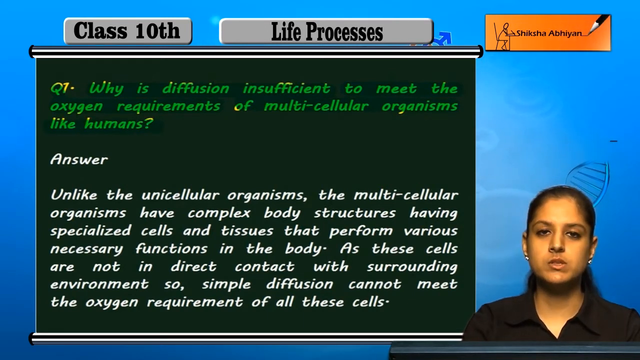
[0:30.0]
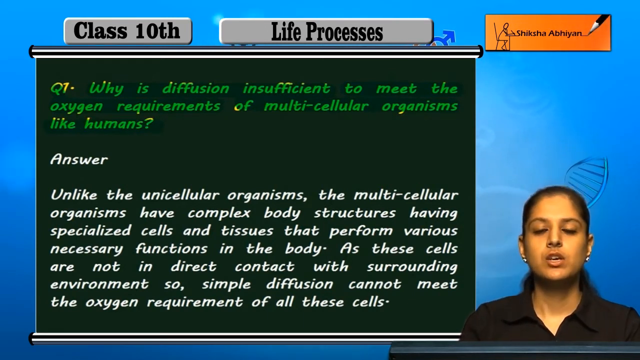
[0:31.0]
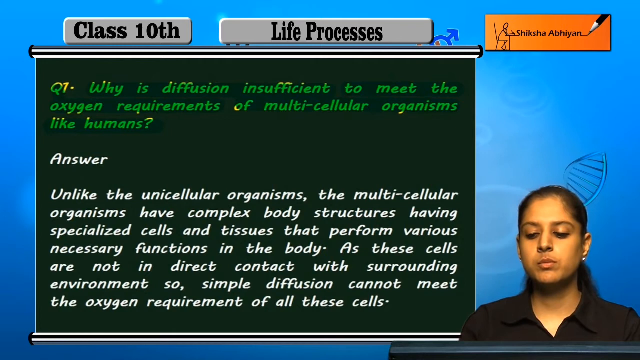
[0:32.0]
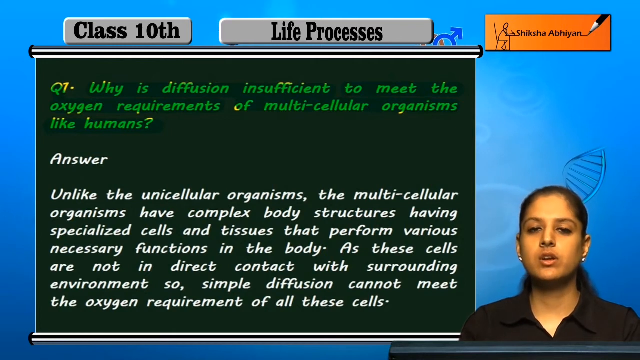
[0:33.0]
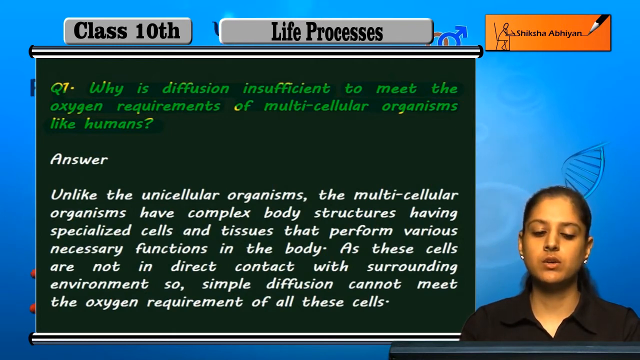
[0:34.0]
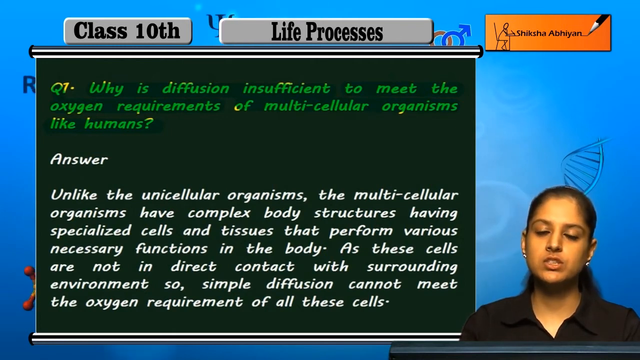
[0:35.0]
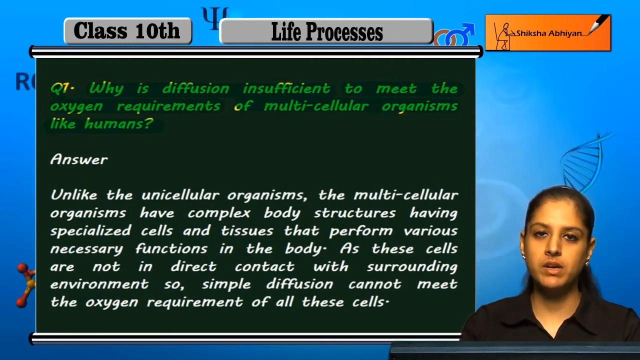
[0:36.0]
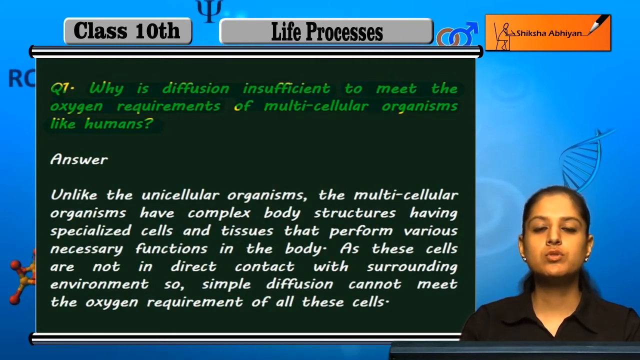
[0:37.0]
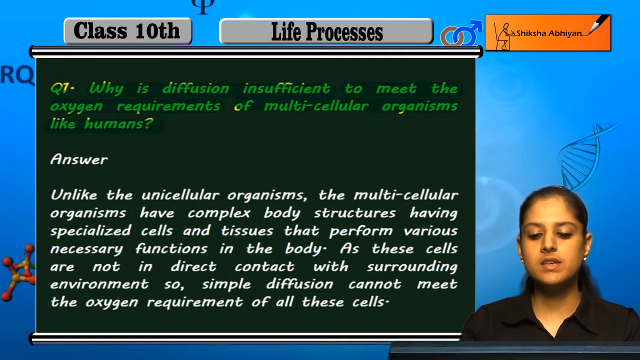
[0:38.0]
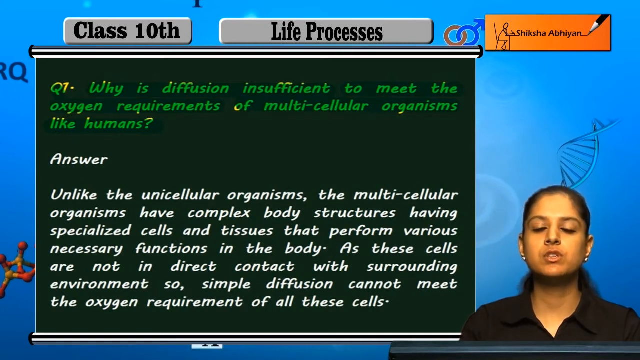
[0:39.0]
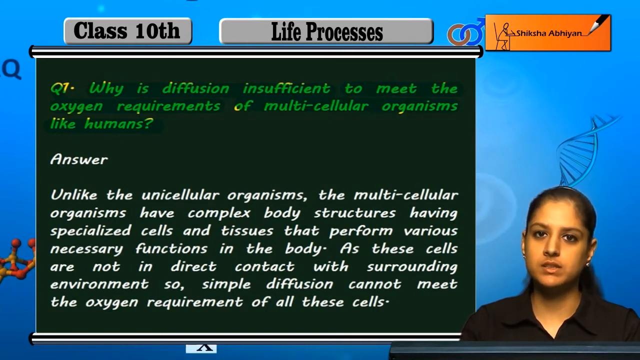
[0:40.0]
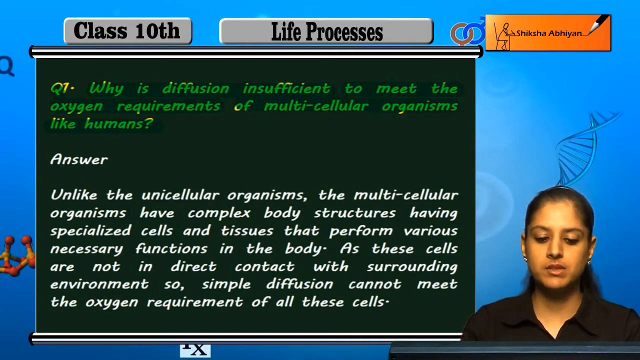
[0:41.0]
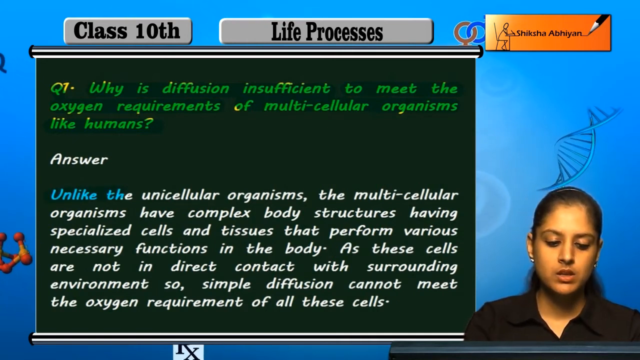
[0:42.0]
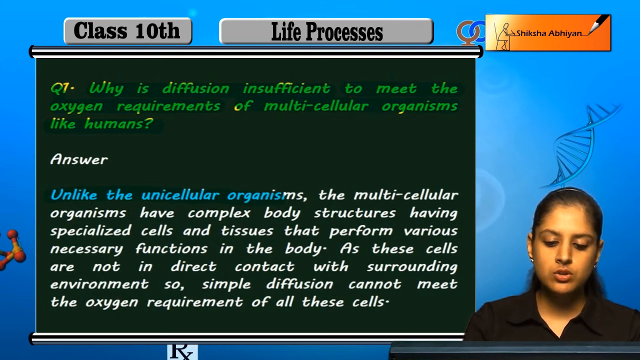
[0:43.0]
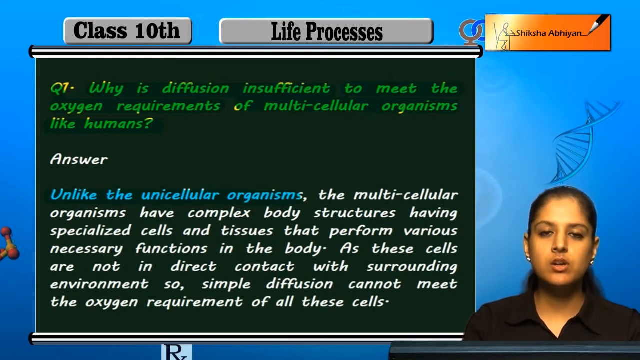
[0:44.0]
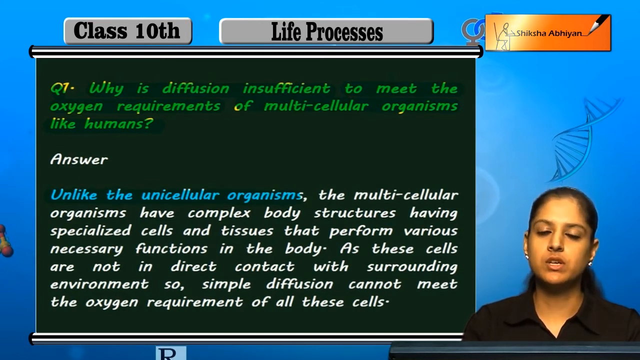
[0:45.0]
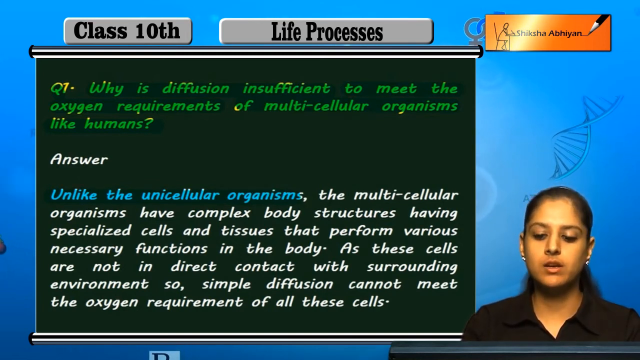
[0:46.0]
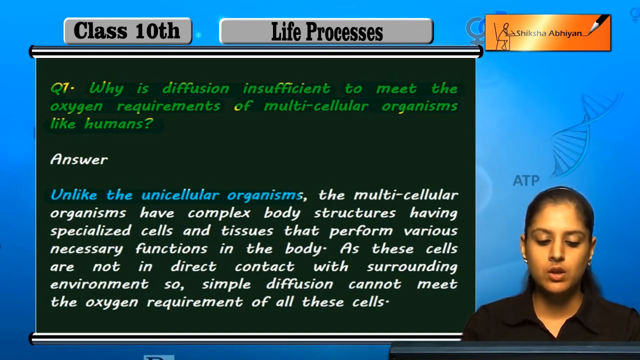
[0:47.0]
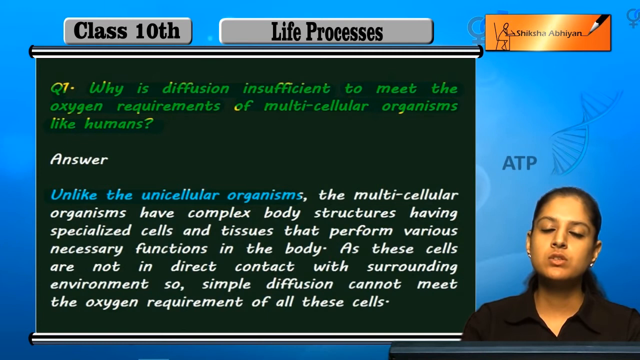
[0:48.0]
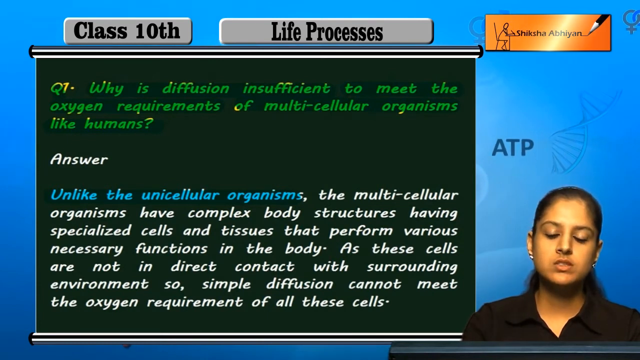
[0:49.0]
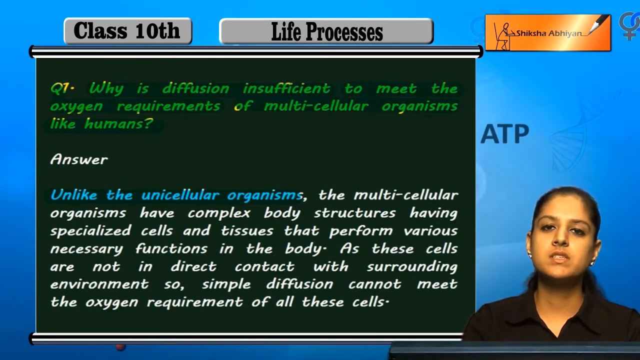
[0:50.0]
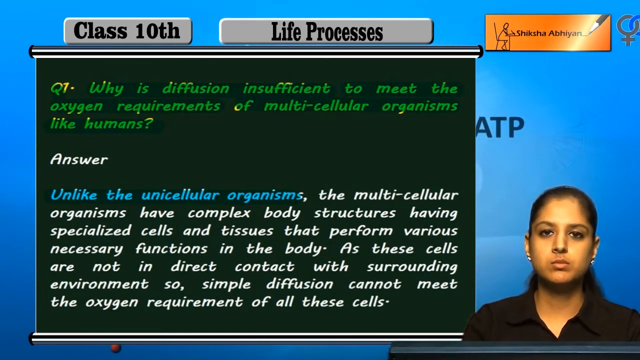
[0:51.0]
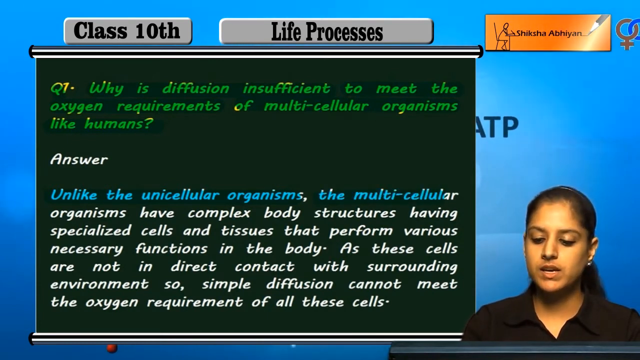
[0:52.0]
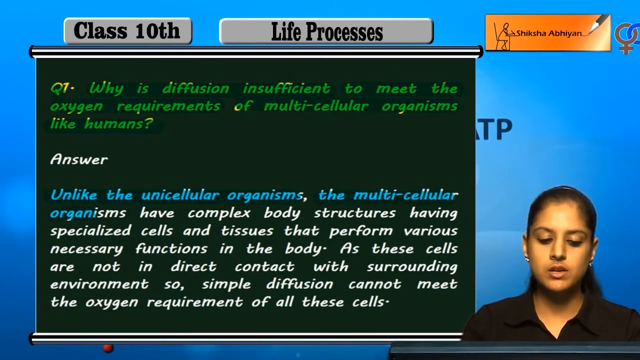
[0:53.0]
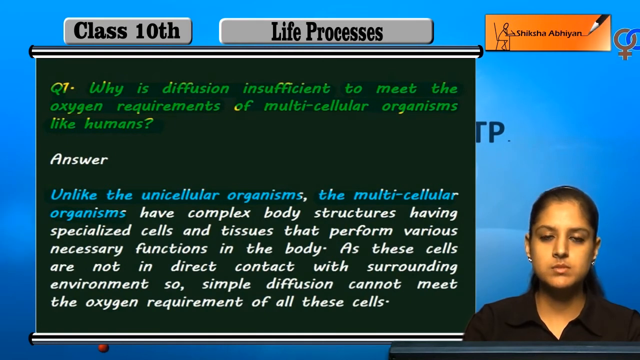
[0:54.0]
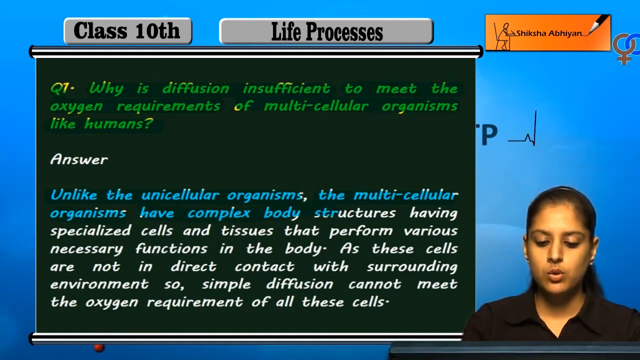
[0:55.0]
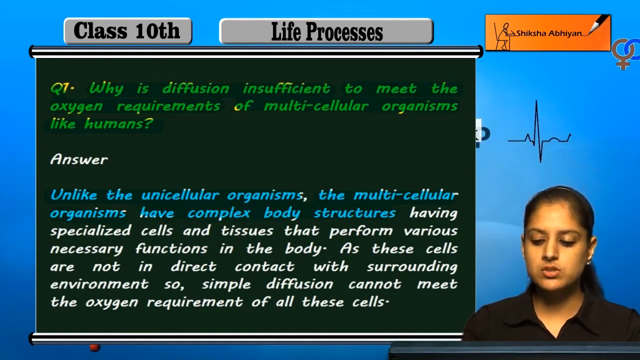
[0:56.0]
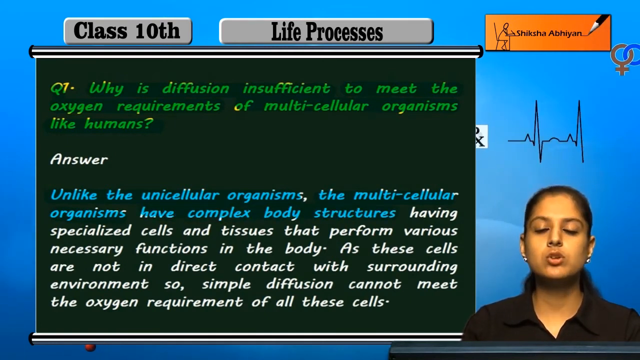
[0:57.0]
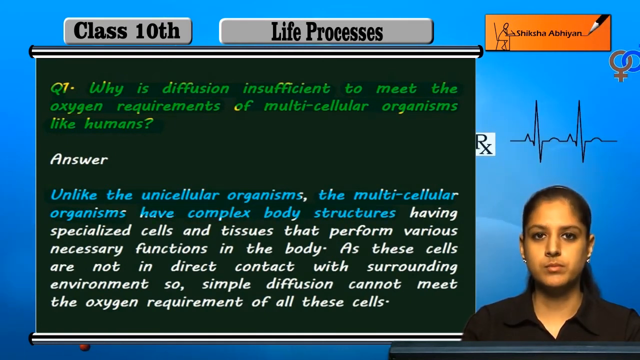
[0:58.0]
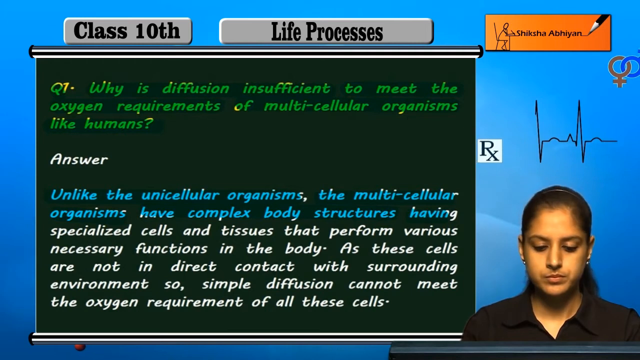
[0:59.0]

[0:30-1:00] The person remains in the lower right of the screen in this educational video. In the upper left, on a board that looks like a green chalkboard, is the question "Why is diffusion insufficient to meet the oxygen requirements of multicellular organisms like humans?" with the answer below it.